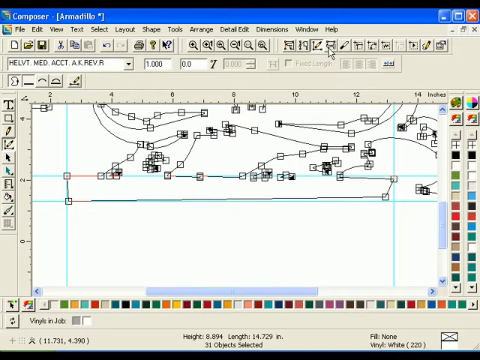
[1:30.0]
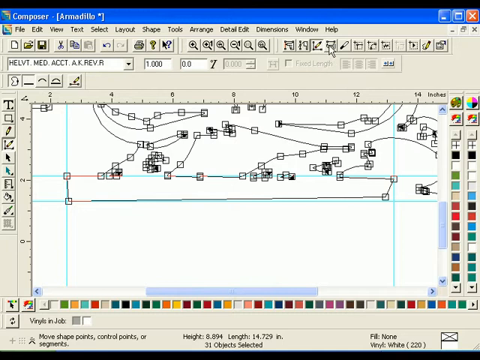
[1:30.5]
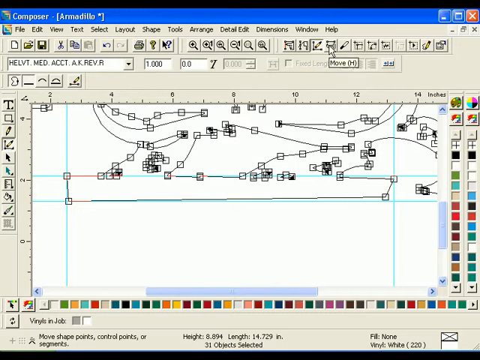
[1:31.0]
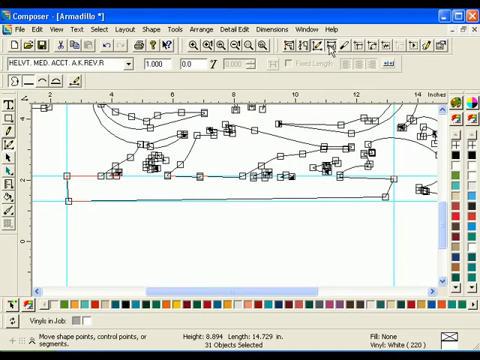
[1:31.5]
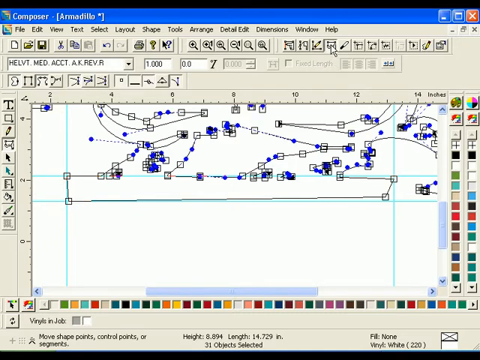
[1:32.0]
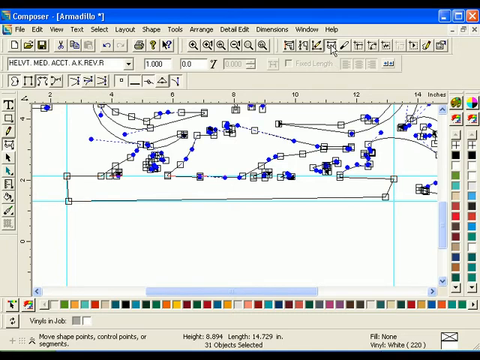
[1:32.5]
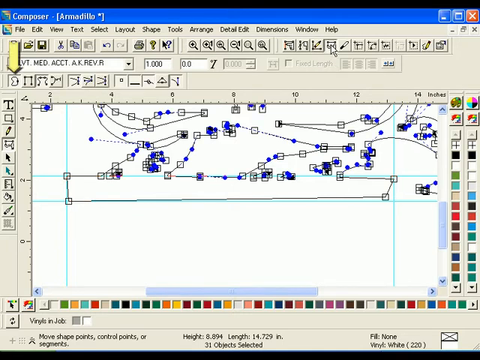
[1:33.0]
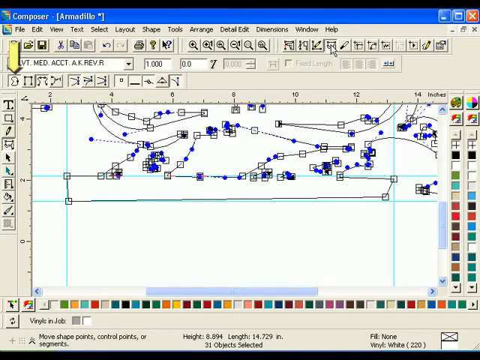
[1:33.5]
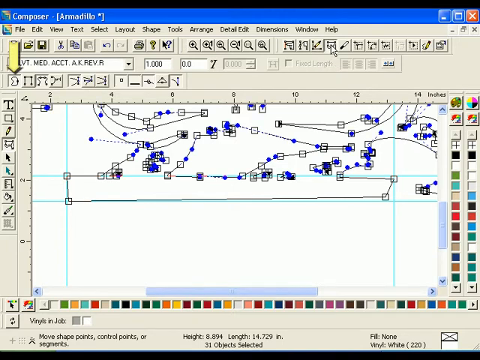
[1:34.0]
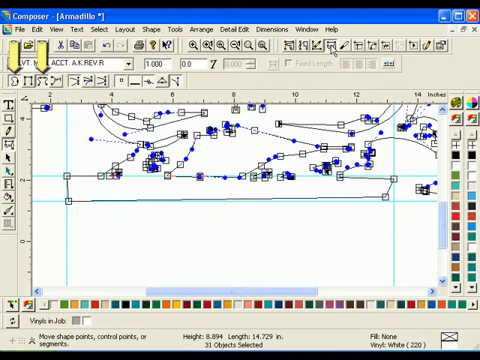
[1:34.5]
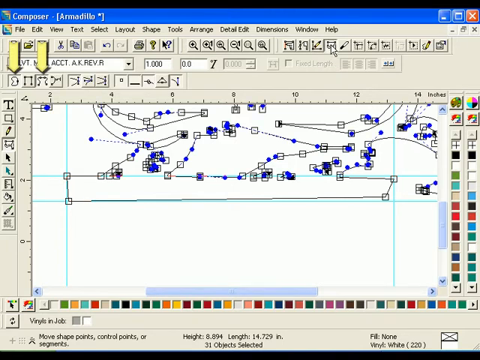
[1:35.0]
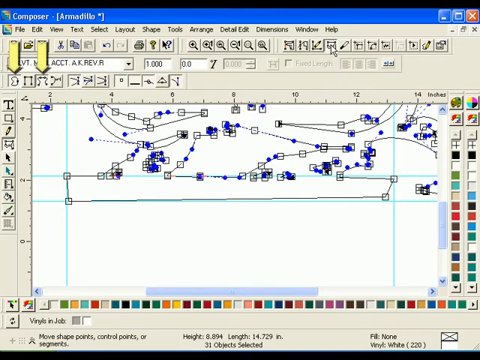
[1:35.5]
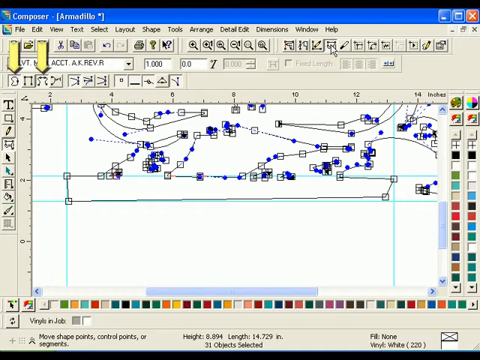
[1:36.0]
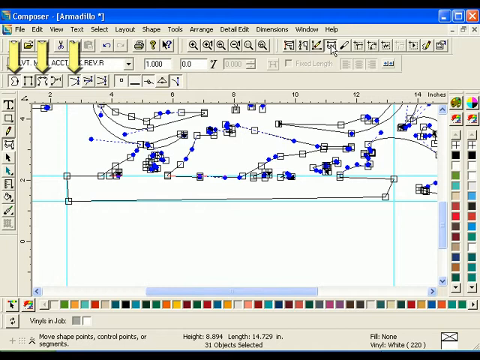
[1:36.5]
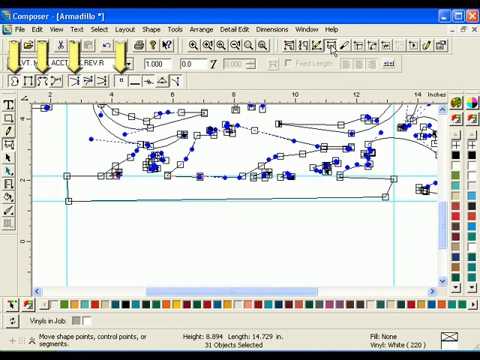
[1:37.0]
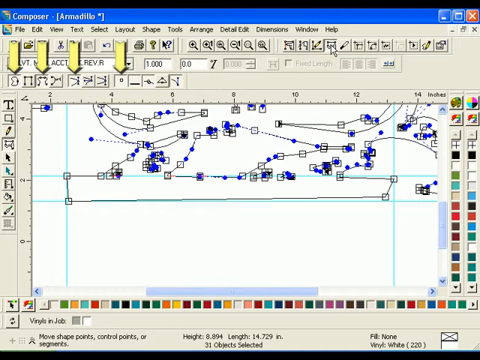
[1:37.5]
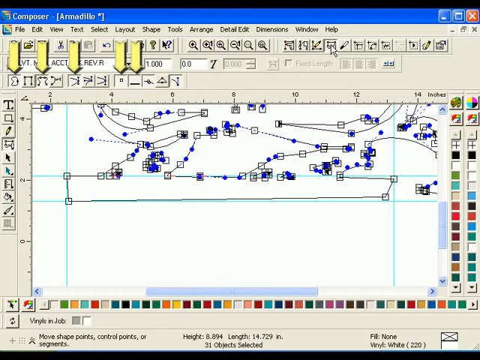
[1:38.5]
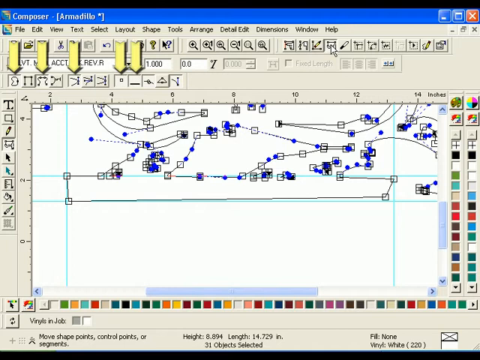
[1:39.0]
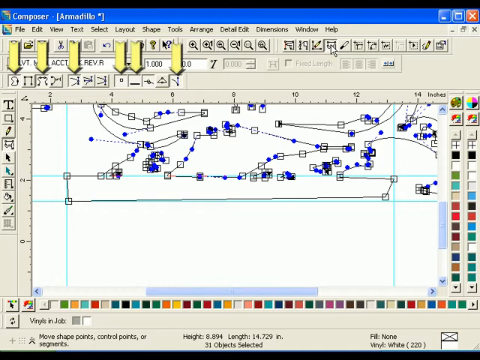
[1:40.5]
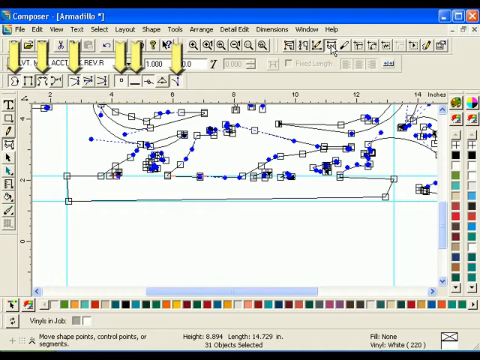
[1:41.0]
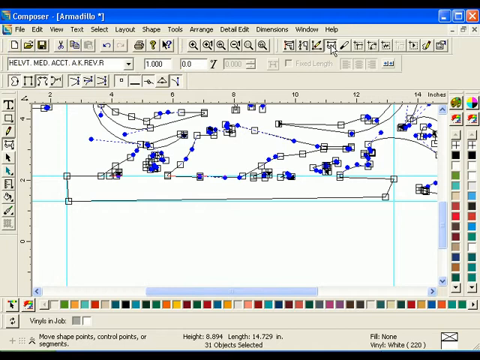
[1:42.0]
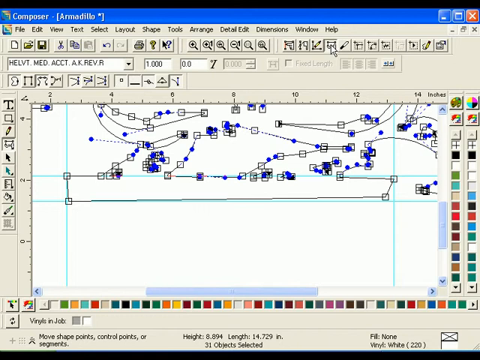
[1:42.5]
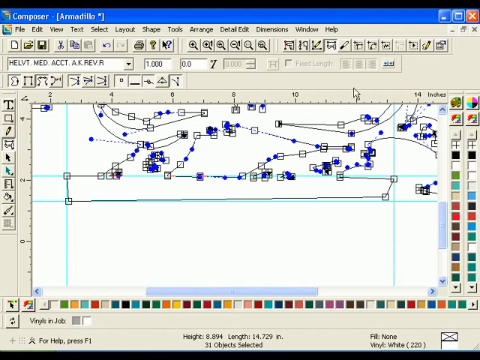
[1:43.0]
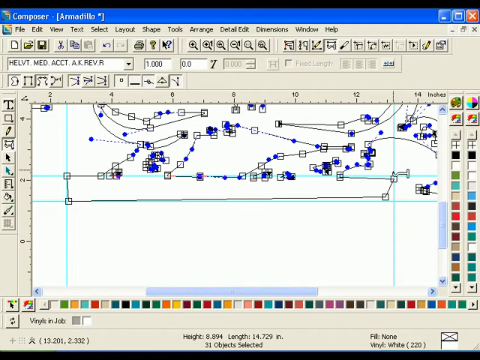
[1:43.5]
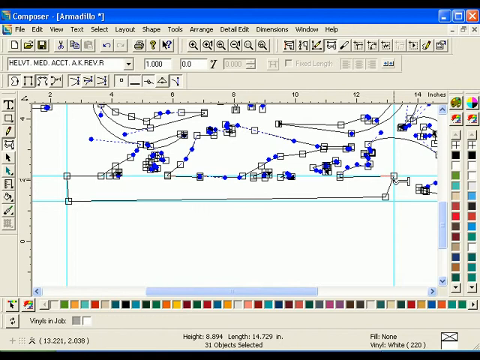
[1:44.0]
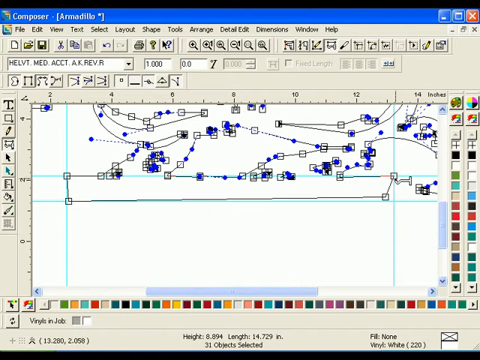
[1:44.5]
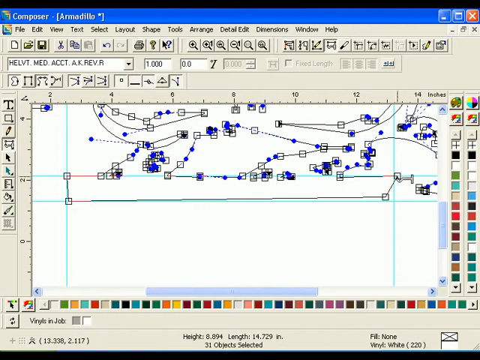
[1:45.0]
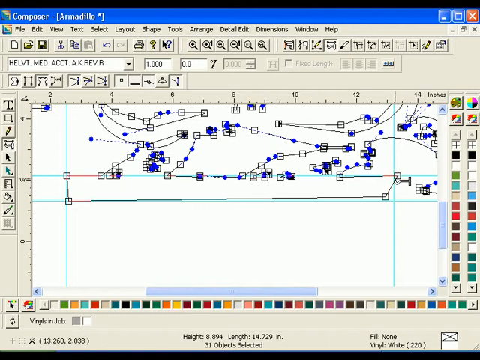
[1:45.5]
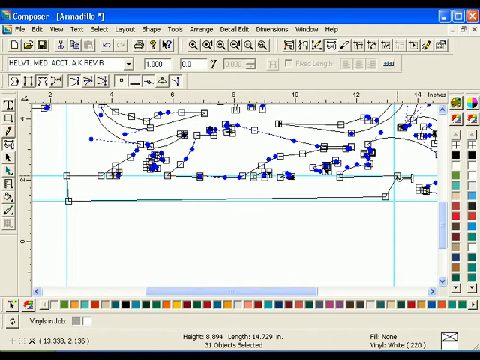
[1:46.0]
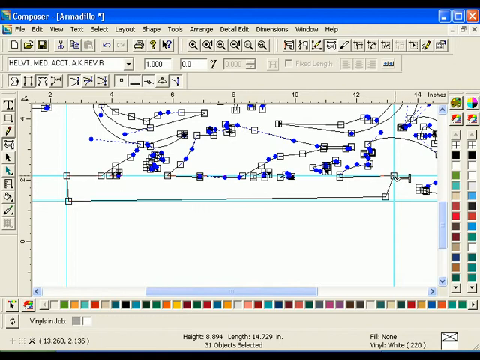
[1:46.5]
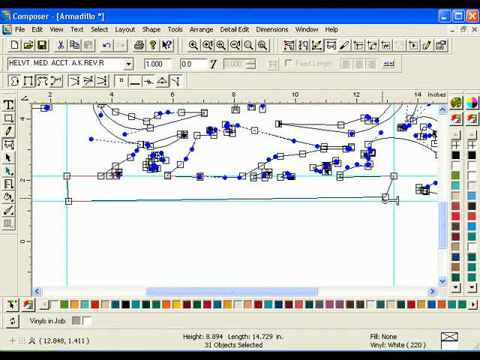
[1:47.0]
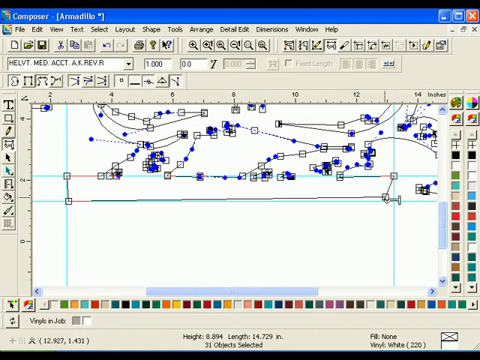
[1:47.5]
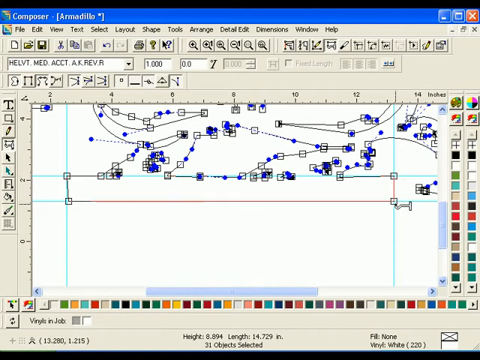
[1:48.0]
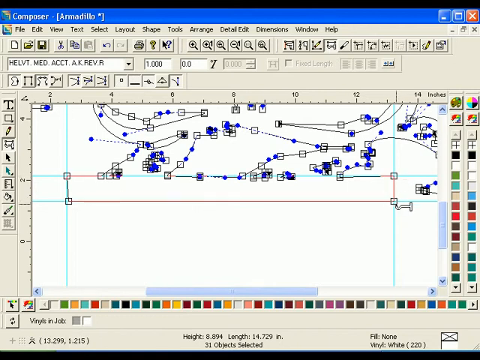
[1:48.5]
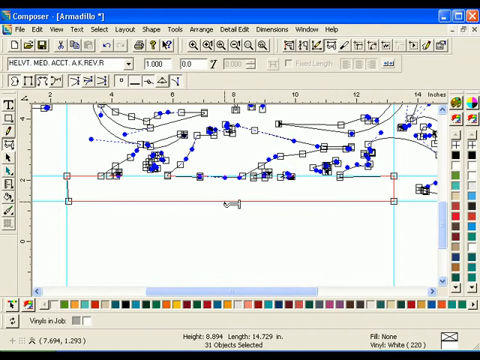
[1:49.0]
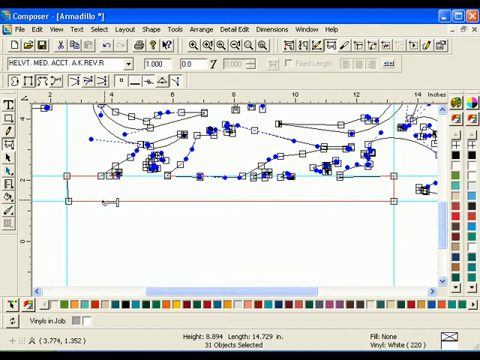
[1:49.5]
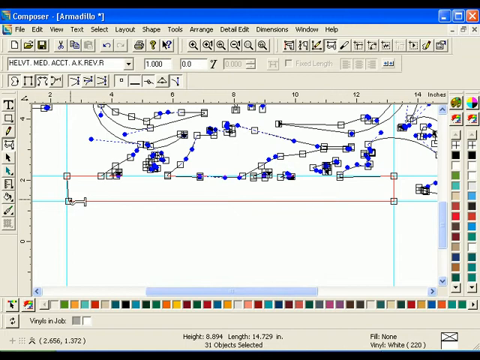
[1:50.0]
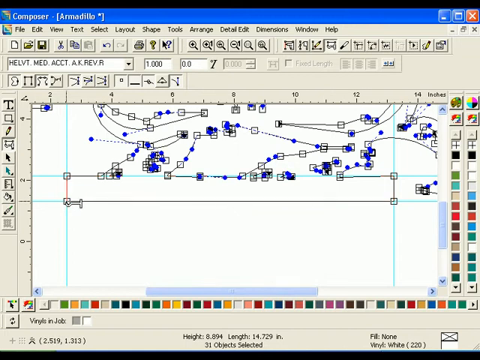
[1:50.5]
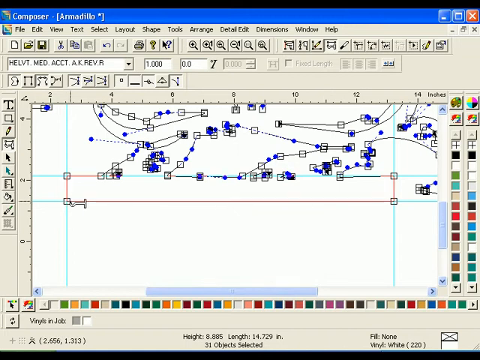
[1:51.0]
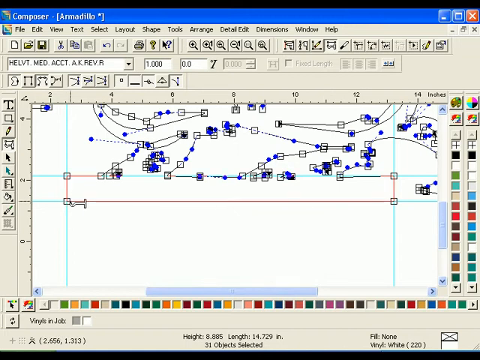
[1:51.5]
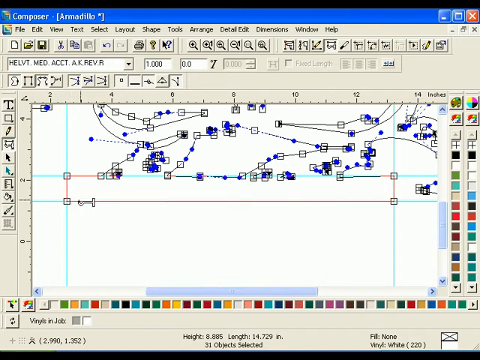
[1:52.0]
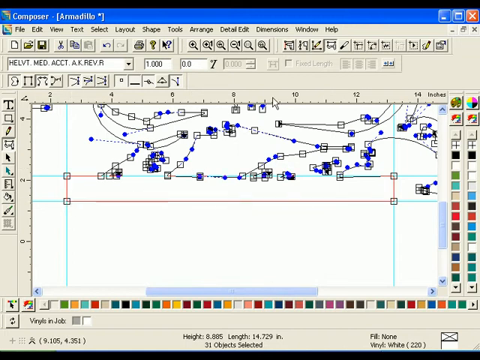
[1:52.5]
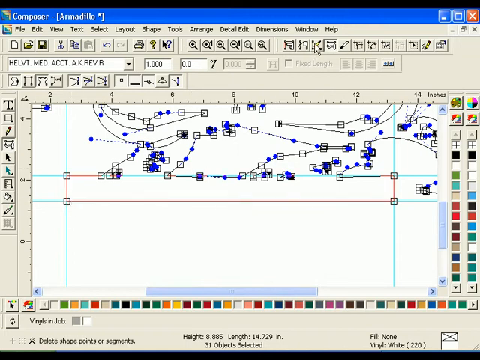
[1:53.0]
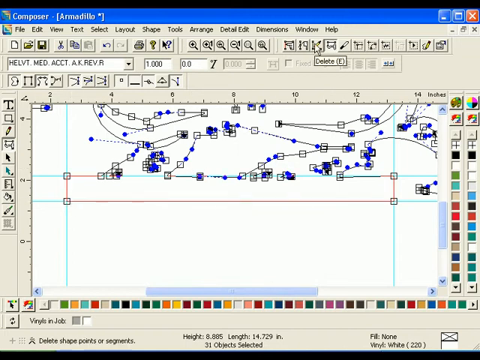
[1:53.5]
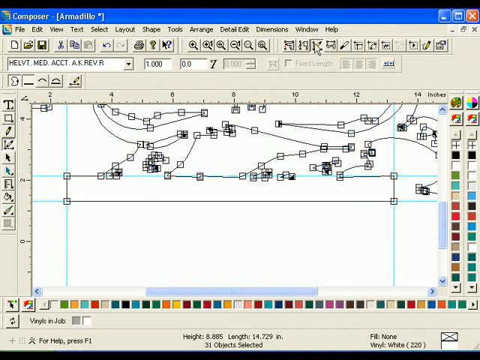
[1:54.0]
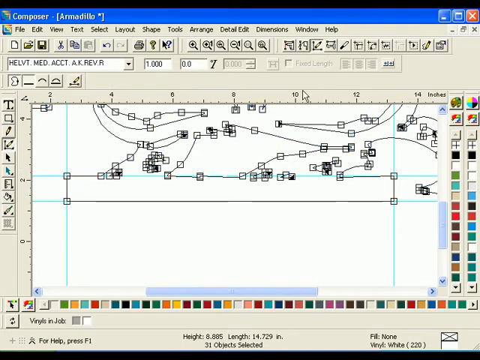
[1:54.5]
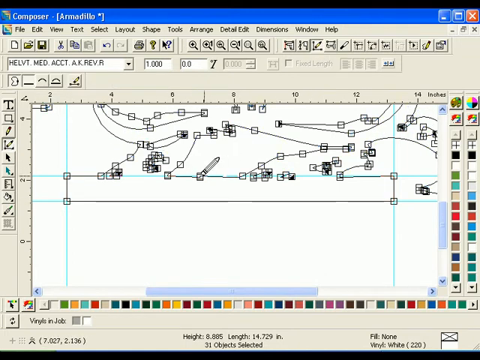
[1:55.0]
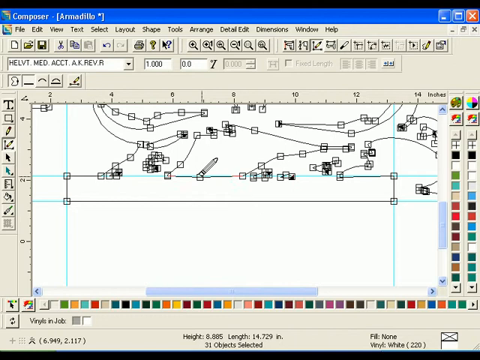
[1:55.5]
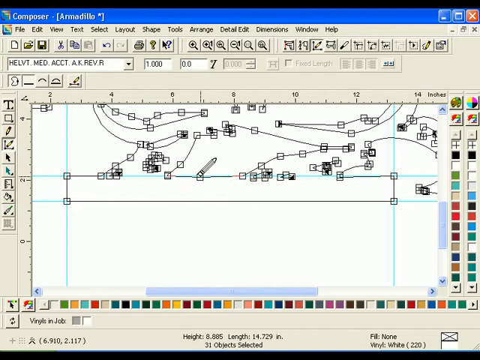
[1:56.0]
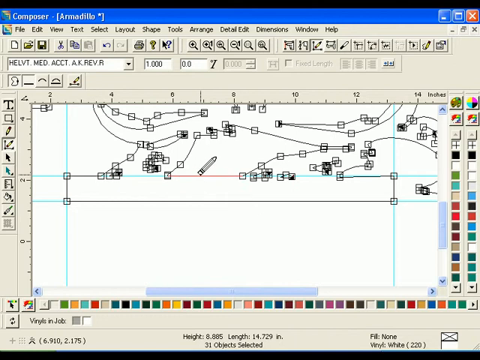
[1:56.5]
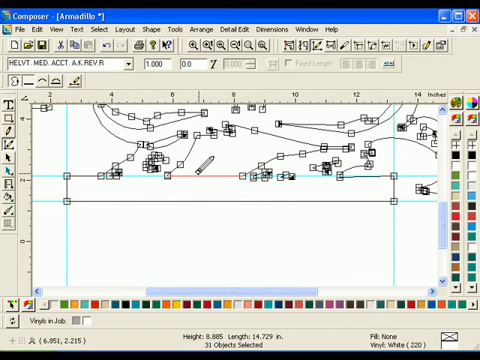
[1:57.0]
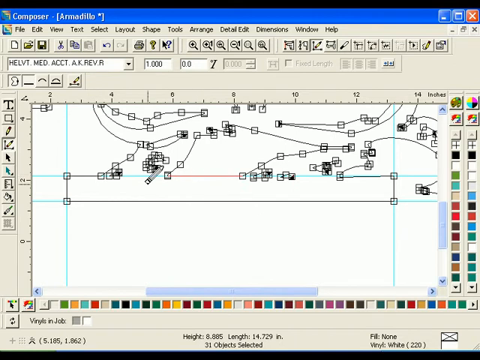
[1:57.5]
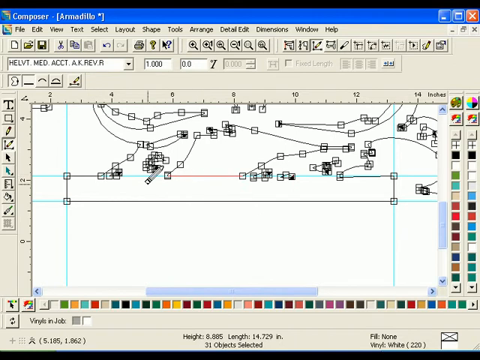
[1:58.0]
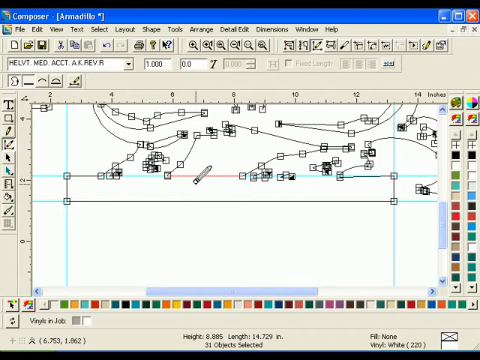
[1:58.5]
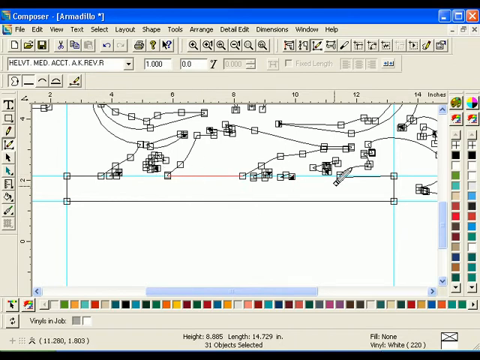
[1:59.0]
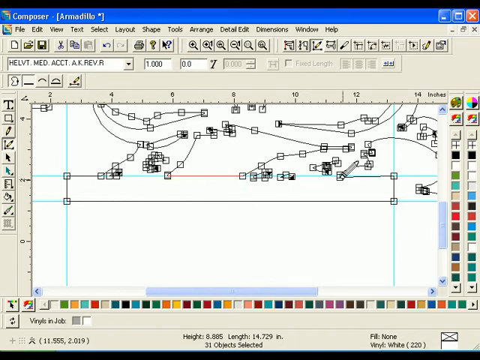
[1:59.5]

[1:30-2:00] An editing tool that looks almost like paint, but is not, is shown. White text at the top left reads "Composer -" and then, in parentheses, "armadillo." Headers at the top read "File, Edit, View, Text, Select, Layout, Shape, Tools, Arrange, Detail, Edit, Dimensions, Window, Help." There are three rows of what could be icons, and on the right and the bottom are many squares of different colors. In the middle, on a white canvas, is what looks like a line picture with many squares around its corners. A white cursor moves to the top of the application, hovers over a button that reads "Move, H," and clicks it. Many blue dots suddenly appear on the line picture. Yellow arrows then point downward at icons in the third row from the top left: a squiggly line, another two squiggly lines, a third with a squiggly line pointing left, what looks like a small square as the fourth, a horizontal line, and then what looks like a blue line coming down. There are six of these yellow arrows. The cursor then becomes what looks like a hook pointing left, with a vertical handle on the right. With it, the squares at the corners of the line picture can apparently be moved. At the base of what appears to be an armadillo, it drags a corner to the tip of the teal line, then drags the bottom right corner to the bottom right of the teal lines, making a 90-degree angle, and at the bottom left it looks like a right angle. The base at the bottom now looks like a perfectly square rectangle. The mouse then clicks the delete icon, to the left of the Move icon at the top of the application, and the cursor becomes what looks like the eraser end of a pencil, with the pencil facing diagonally toward the top right. It deletes one of the squares in the middle at the top of the base, then moves to the left and then to the right and erases another square at the top right.